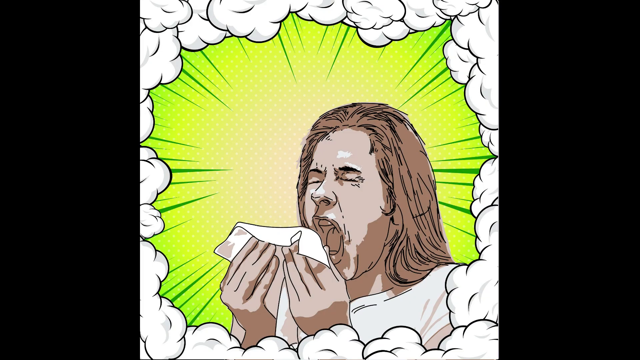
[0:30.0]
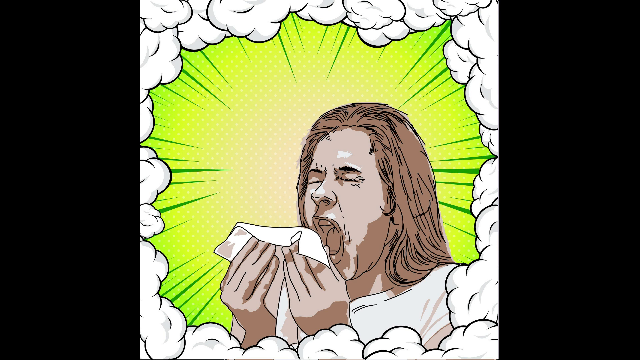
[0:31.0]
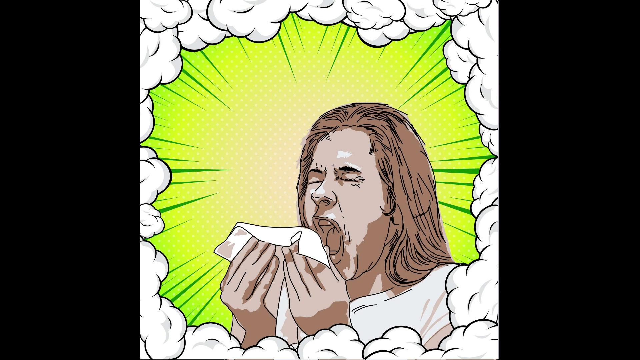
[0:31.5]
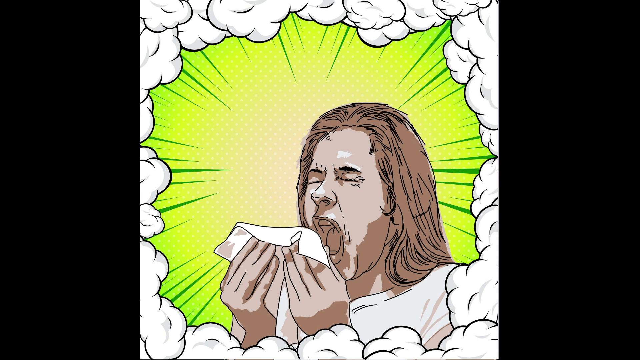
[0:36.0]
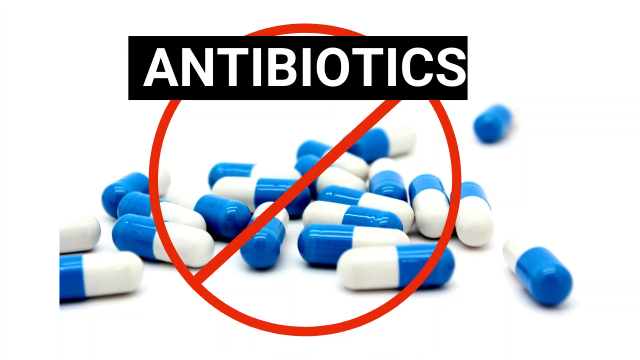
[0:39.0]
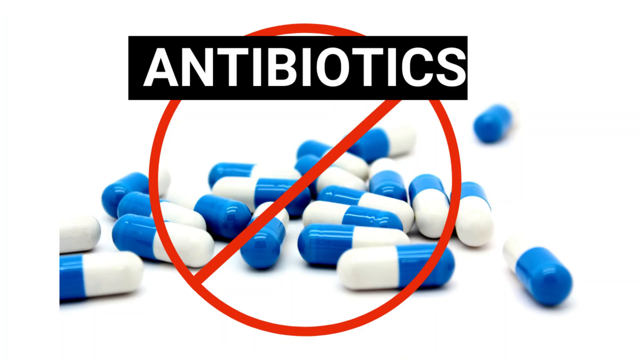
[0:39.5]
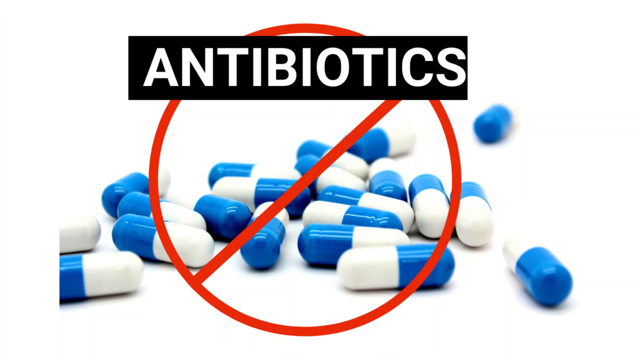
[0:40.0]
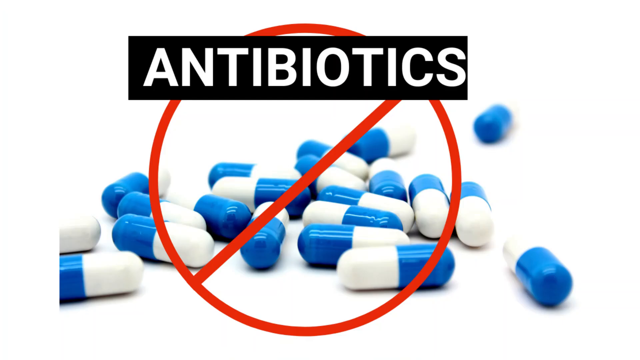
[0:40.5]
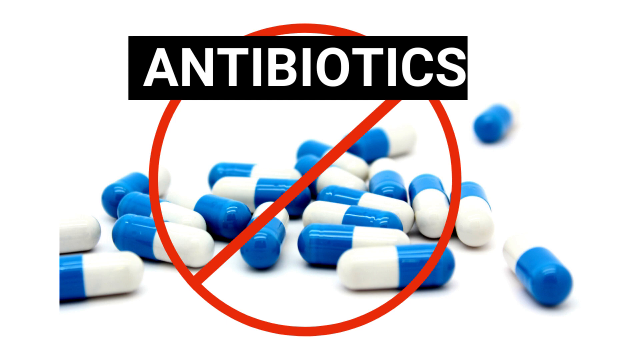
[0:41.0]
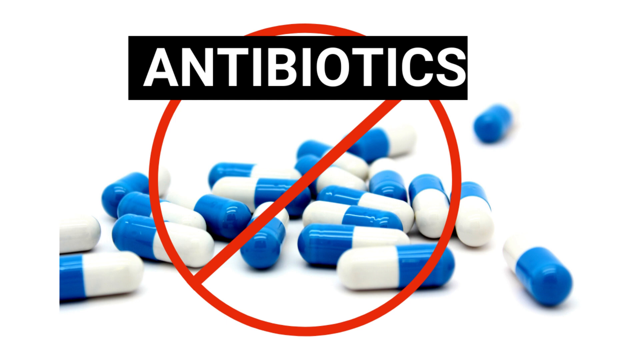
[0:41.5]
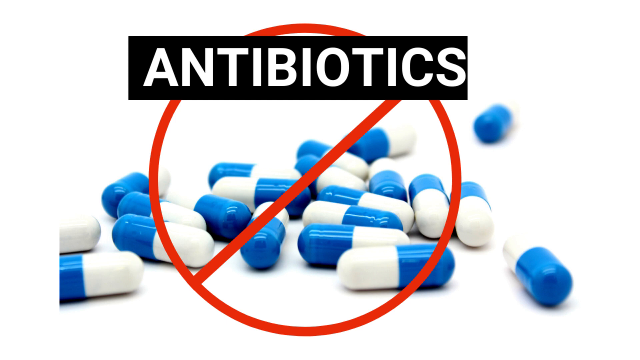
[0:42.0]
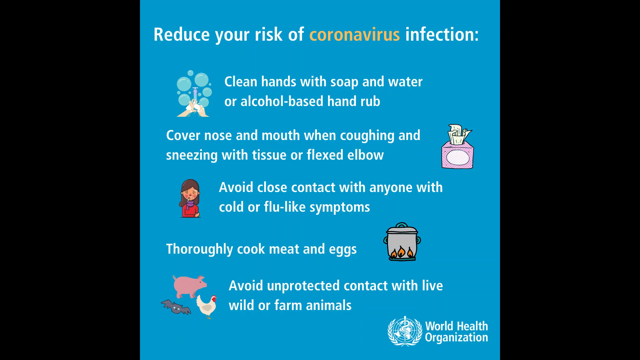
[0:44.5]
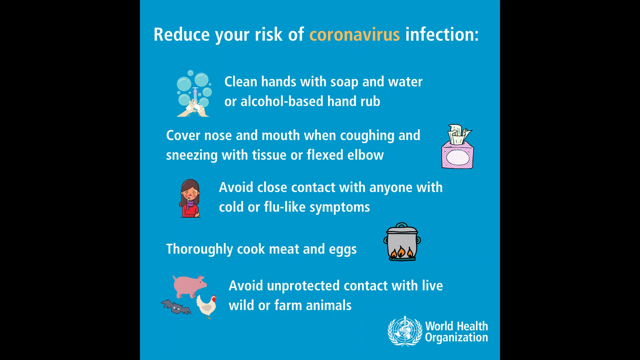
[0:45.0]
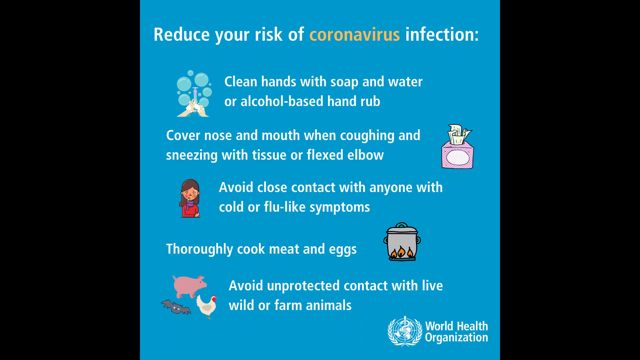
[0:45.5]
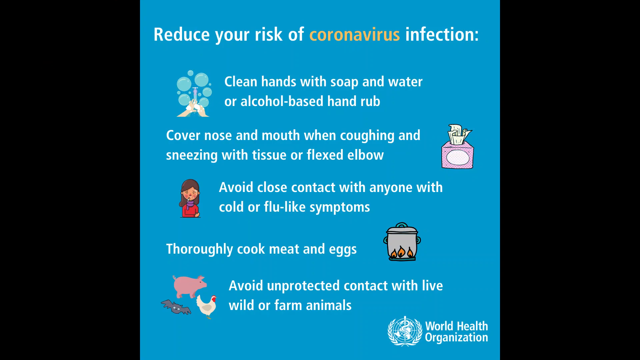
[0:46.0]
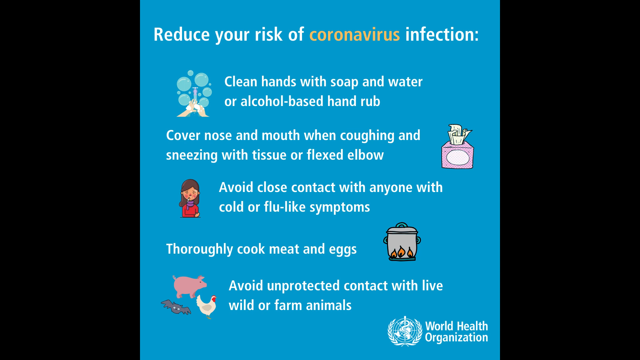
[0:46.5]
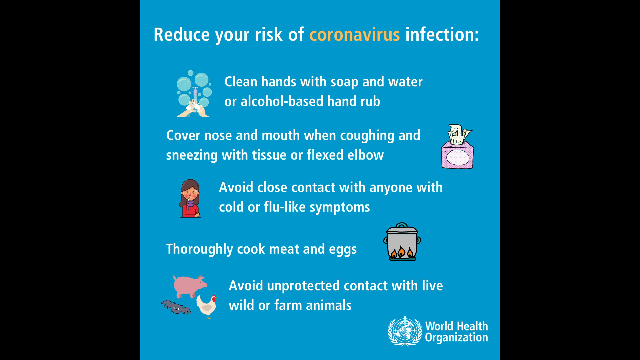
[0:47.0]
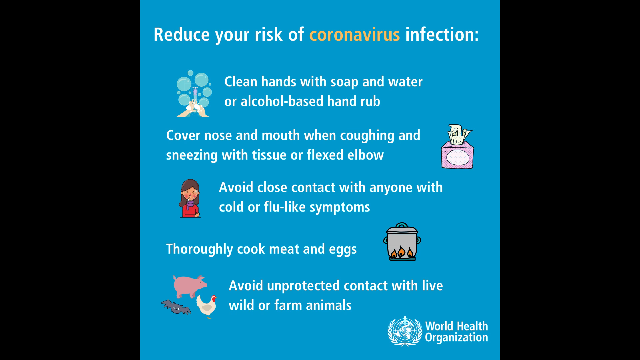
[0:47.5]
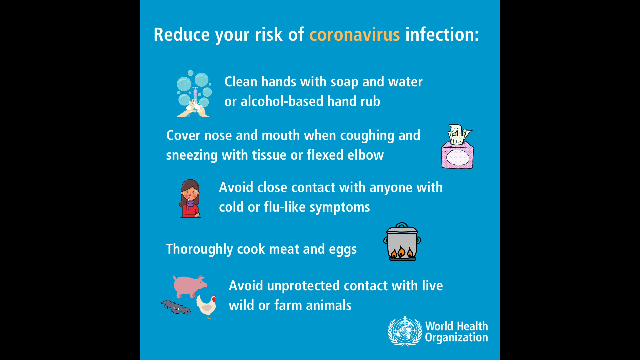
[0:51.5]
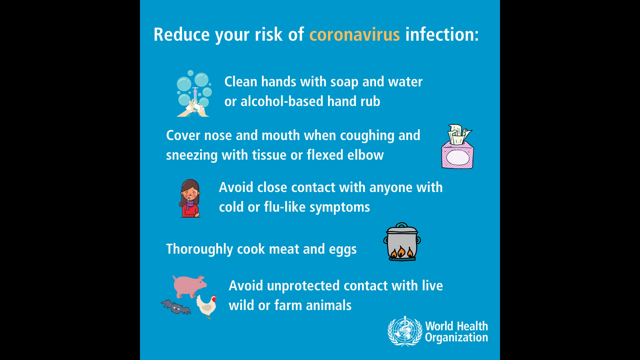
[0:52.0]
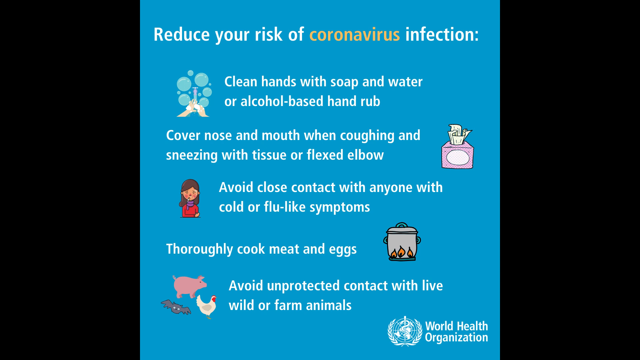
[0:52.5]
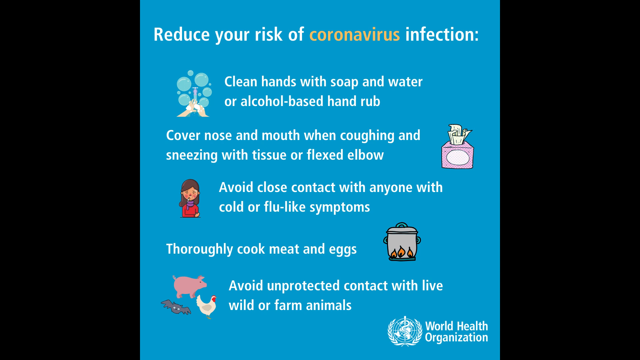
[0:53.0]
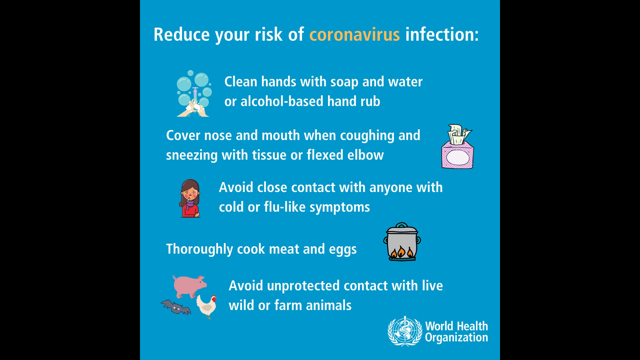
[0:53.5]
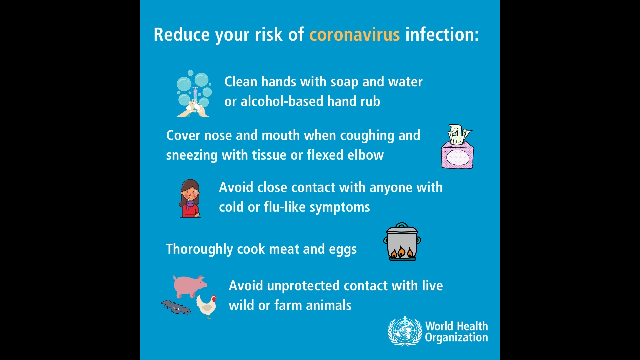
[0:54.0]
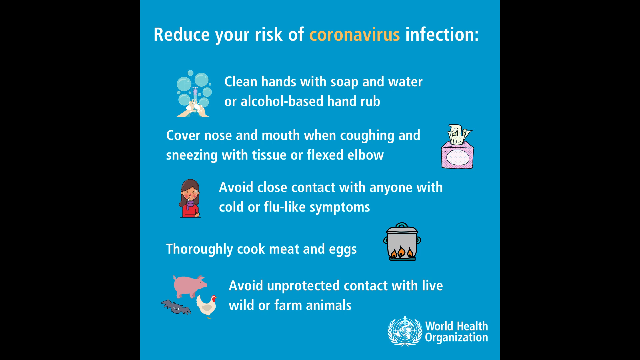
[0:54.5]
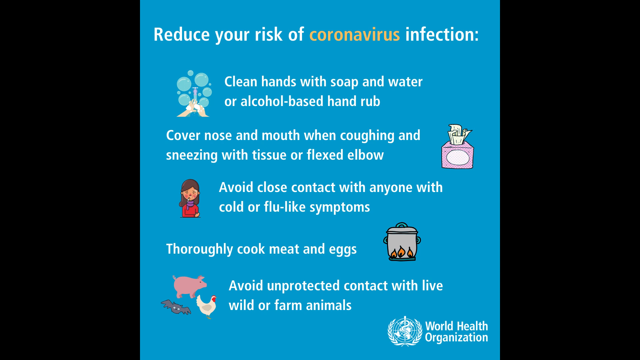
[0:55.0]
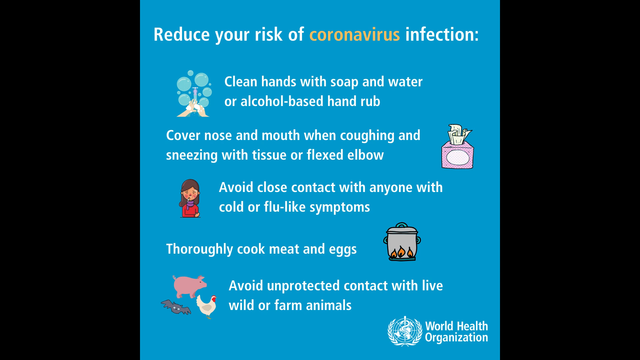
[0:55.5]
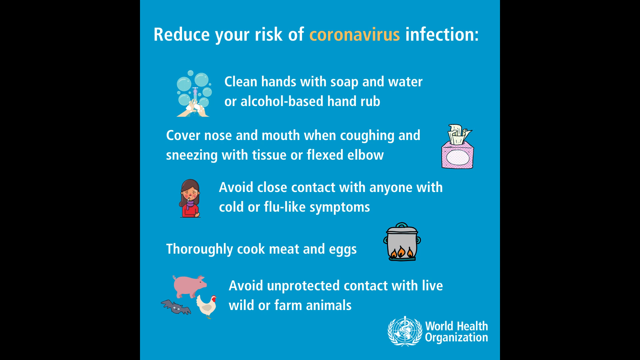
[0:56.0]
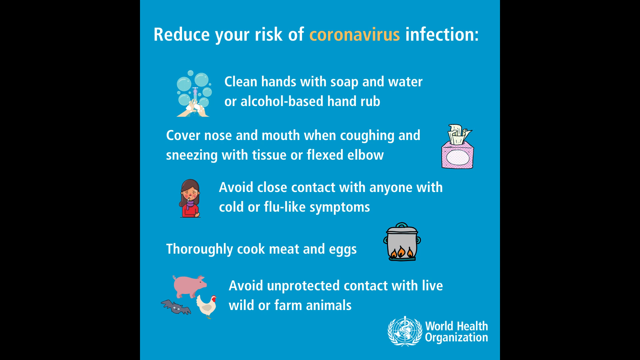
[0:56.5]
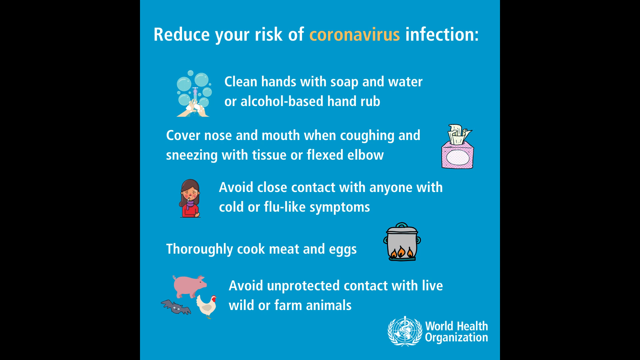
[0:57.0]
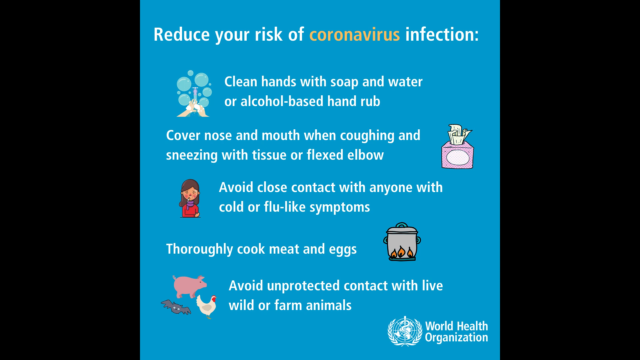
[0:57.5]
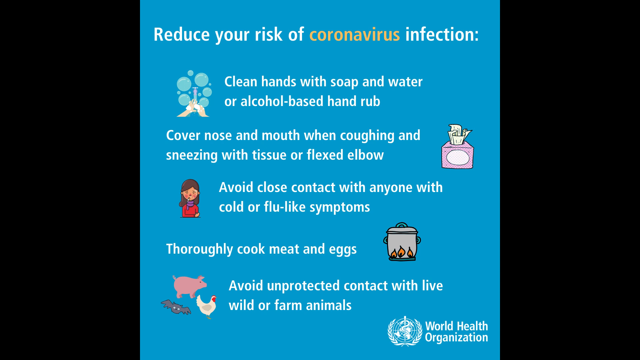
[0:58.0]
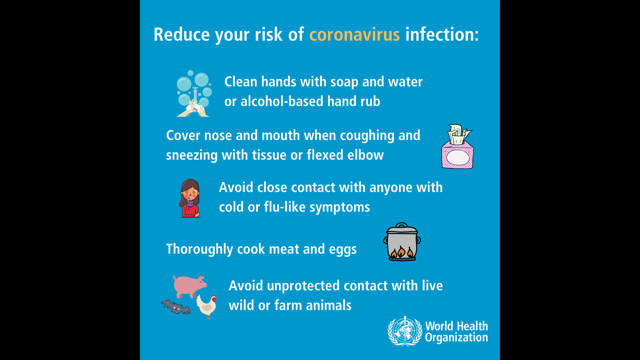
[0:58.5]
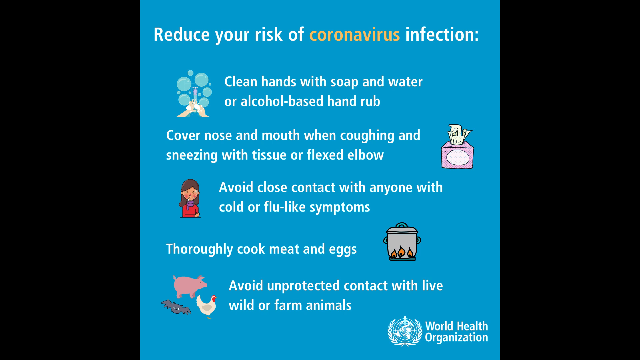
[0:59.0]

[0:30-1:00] A cartoon of a woman with shoulder-length hair holding a tissue with both hands is shown. Her mouth is wide open as if she is coughing. The background is green, with really dark green lights exploding out as if she is coughing, like smoke blowing all around her, and there is nothing but clouds kind of all around her as she coughs or sneezes. Then a slide of antibiotics shows some blue and white capsules with a red circle and slash on them, apparently indicating that they don't work. Next a slide of information about the coronavirus appears. It says "reduce your risk of coronavirus infections by cleaning your hands with soap and water or alcohol," "cover your nose and mouth when coughing and sneezing with a tissue or flex elbow," "avoid close contact with anyone with cold or flu symptoms," "thoroughly cook meat and eggs," and "avoid unprotected contact with live wild or farm animals."